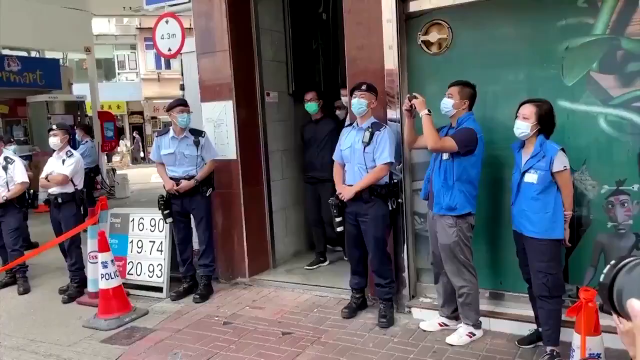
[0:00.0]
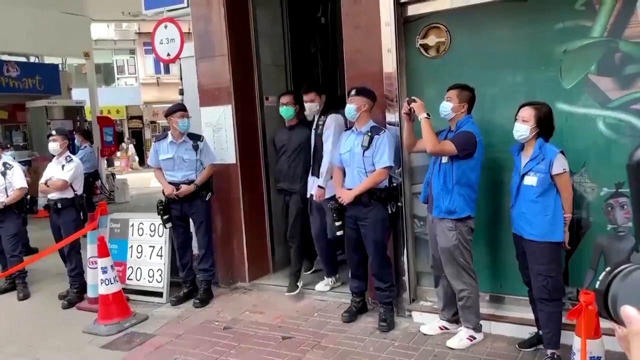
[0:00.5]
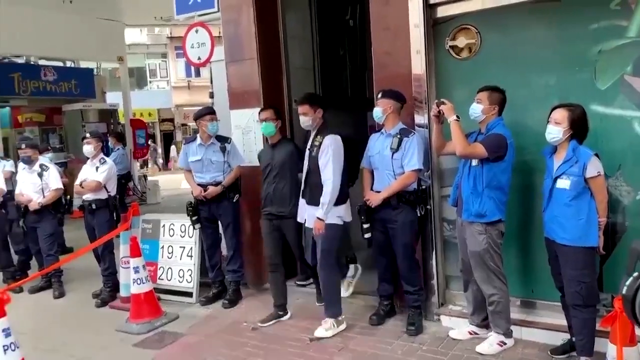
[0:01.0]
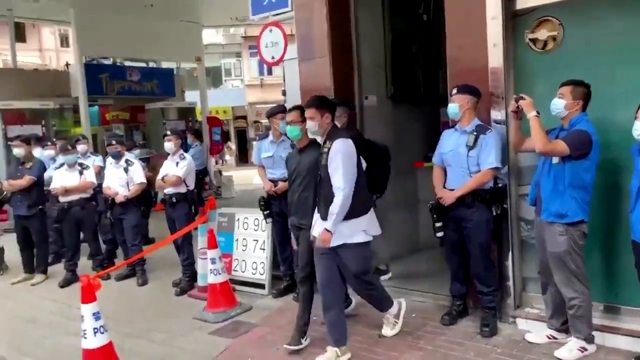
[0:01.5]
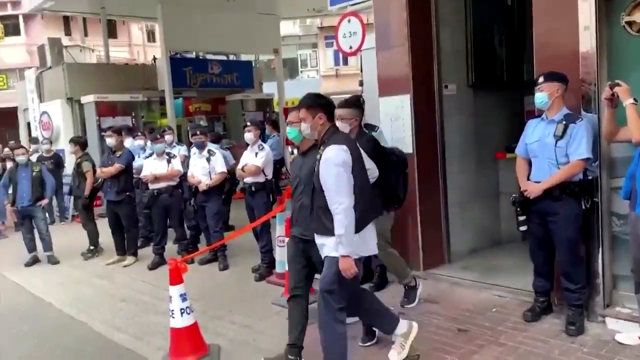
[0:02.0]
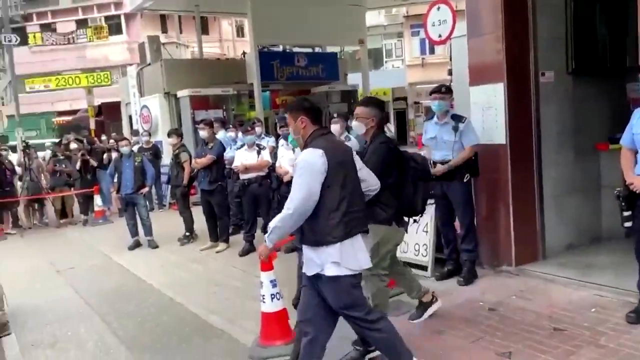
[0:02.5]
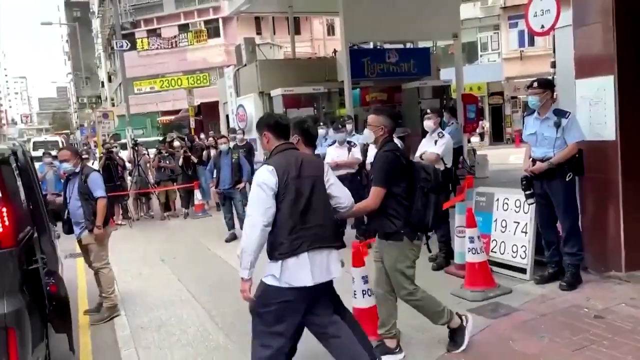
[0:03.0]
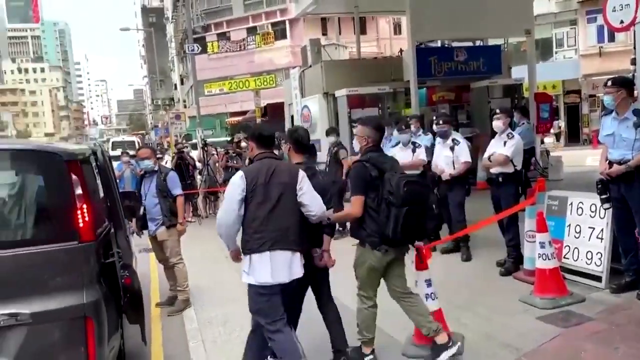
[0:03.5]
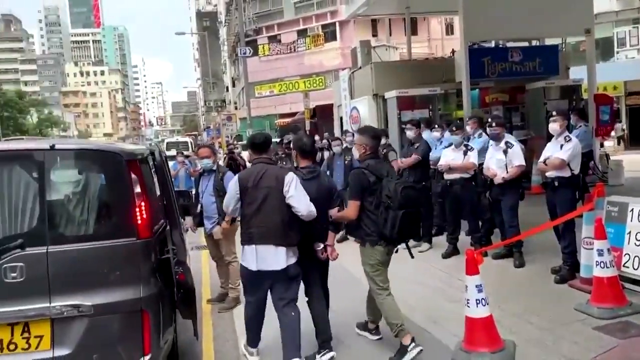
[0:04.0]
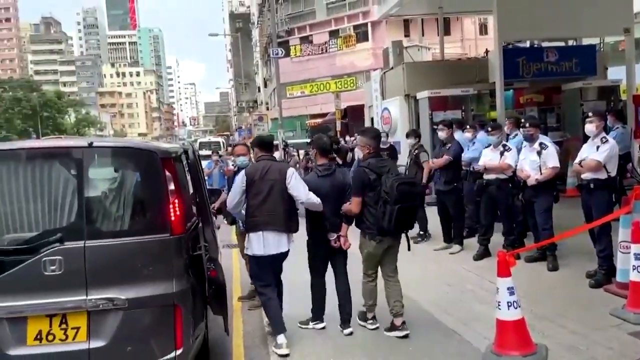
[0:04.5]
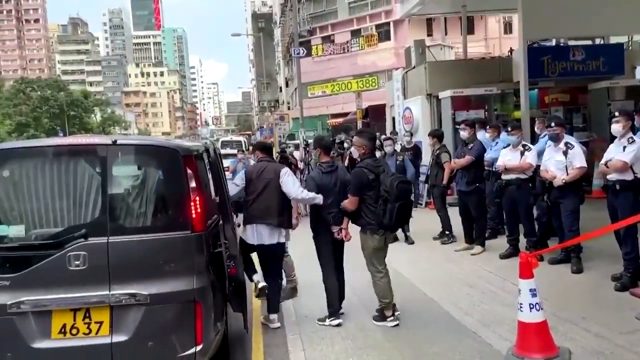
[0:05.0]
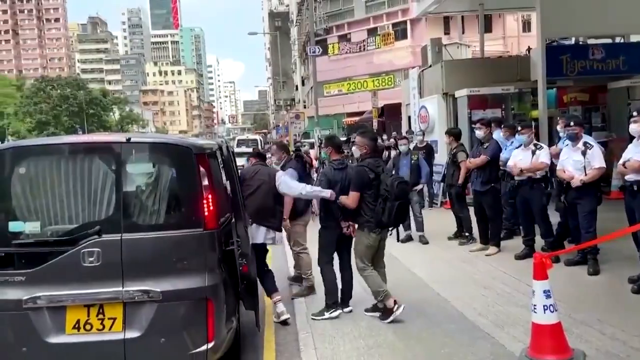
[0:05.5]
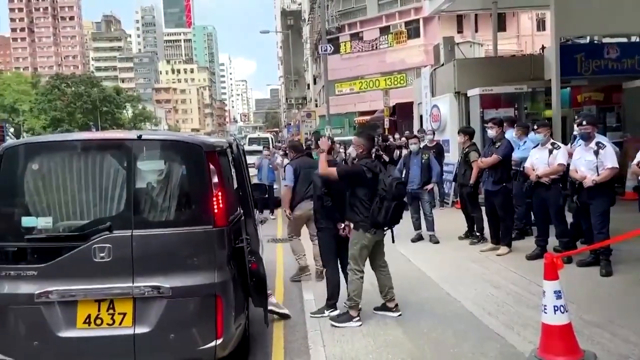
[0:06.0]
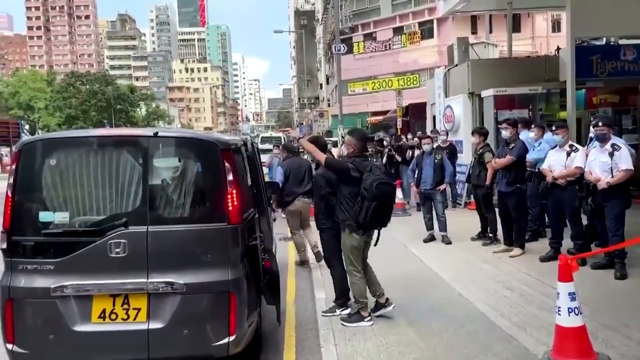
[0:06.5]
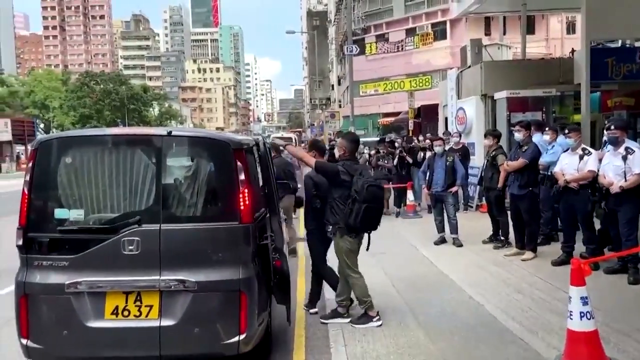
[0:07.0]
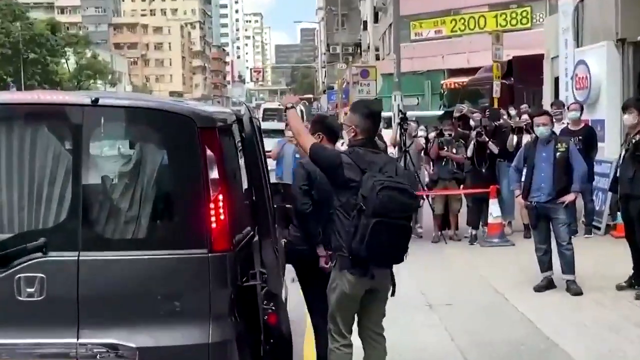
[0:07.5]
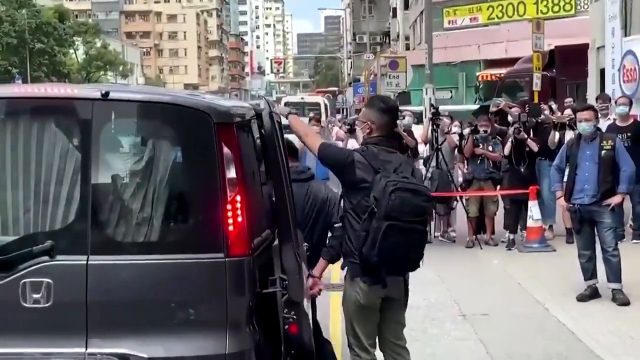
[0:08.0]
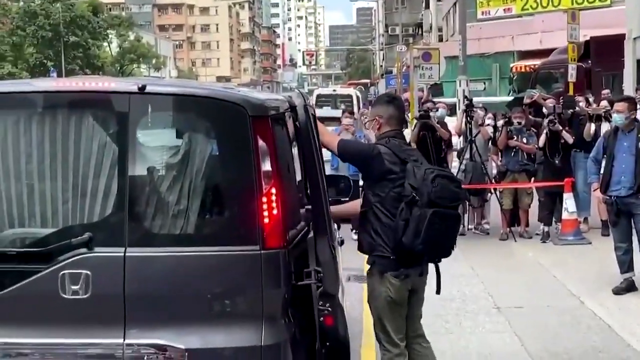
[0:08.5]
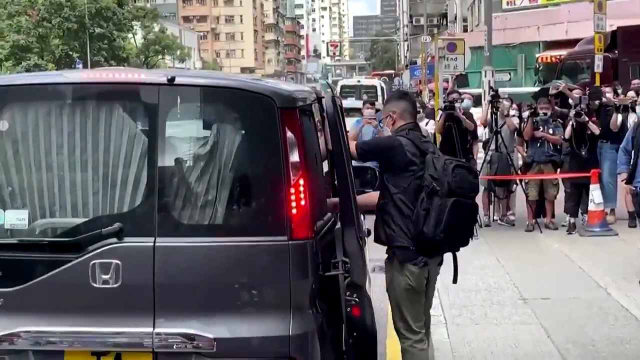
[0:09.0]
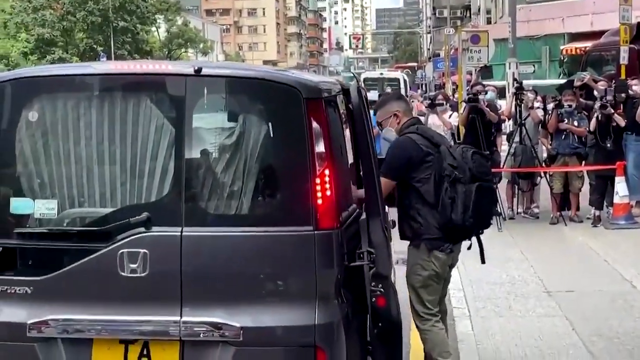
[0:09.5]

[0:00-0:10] The scene is in Asia and opens with many Asian people, perhaps Chinese, wearing masks. Thirteen people stand stationary in a line, while two people walk through a door from the right of the screen towards the left. In the background is a shop called Tiger Mart. Red and white traffic cones on the floor say "police", and a circular sign above reads "4.3 metres". The two people walk out of the building on the right, head towards a car with the number plate TA4537 and get inside, surrounded by many photographers and onlookers. Further in the background, a yellow sign shows the numbers "23001388".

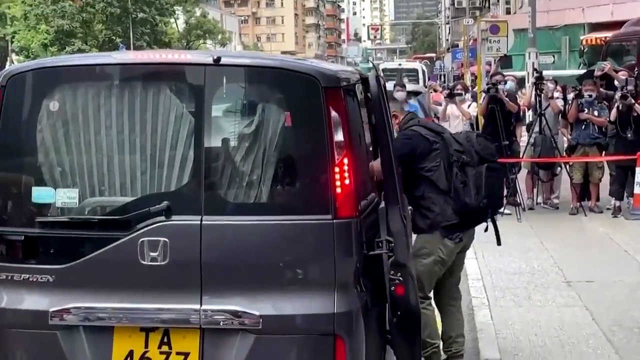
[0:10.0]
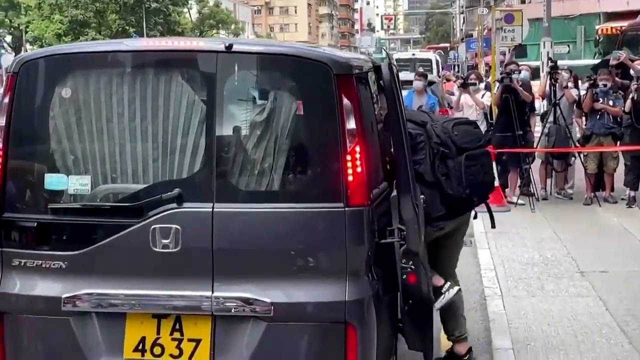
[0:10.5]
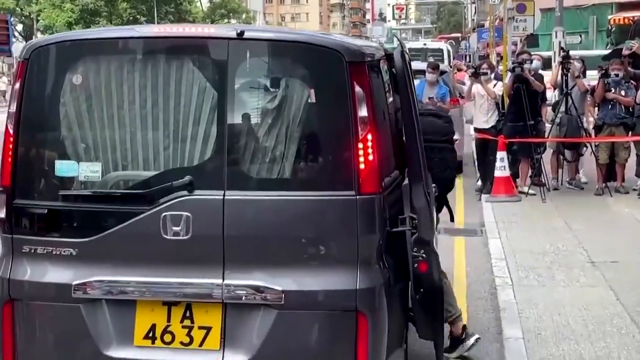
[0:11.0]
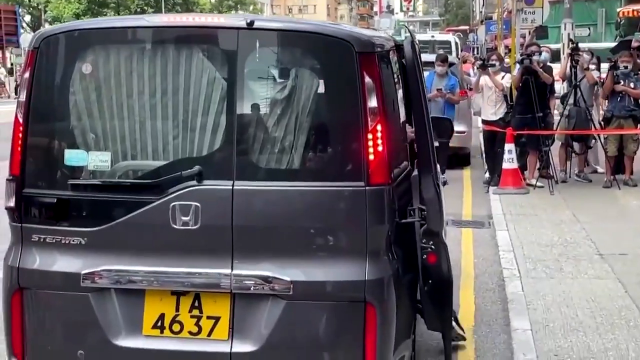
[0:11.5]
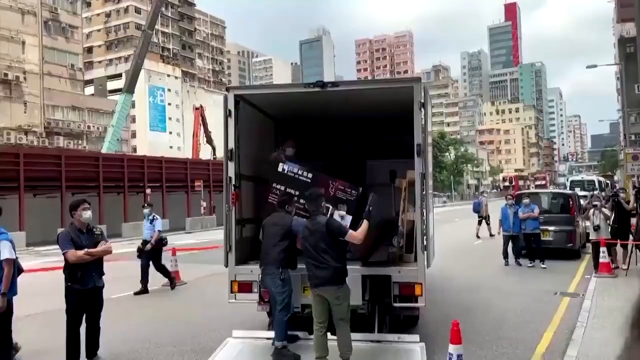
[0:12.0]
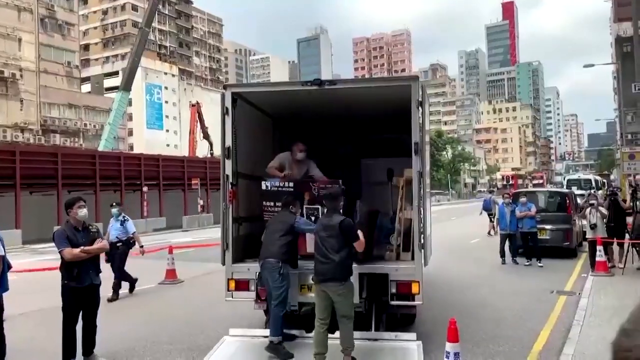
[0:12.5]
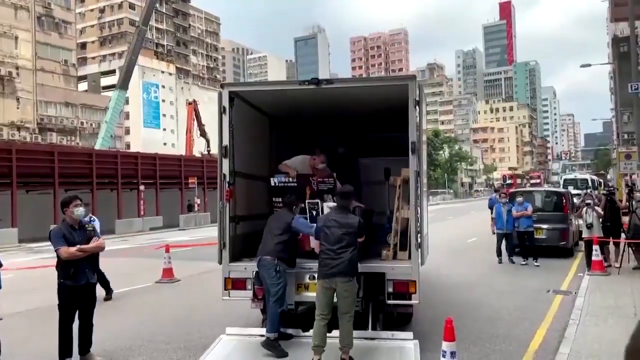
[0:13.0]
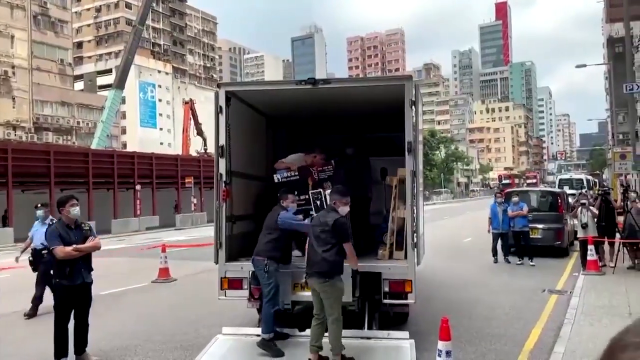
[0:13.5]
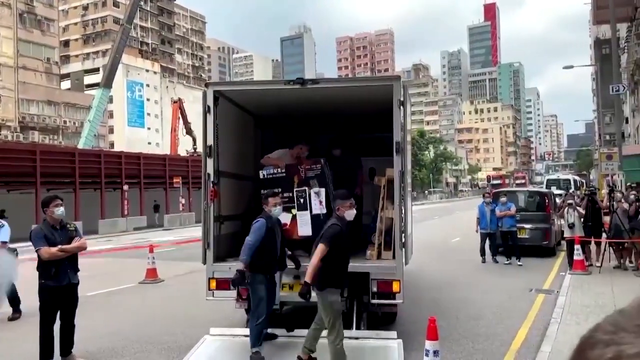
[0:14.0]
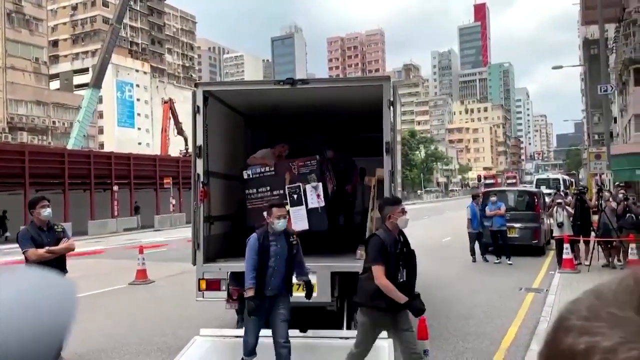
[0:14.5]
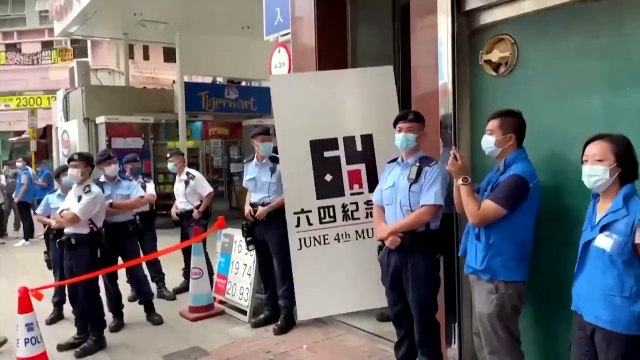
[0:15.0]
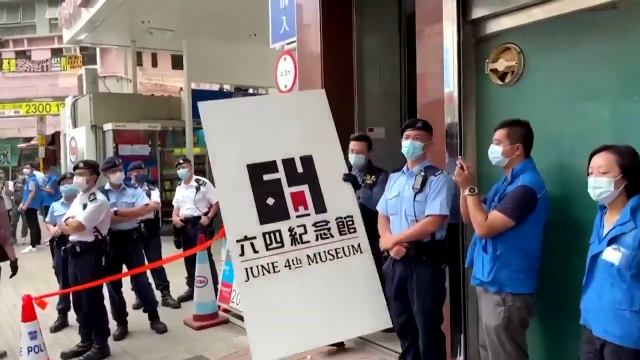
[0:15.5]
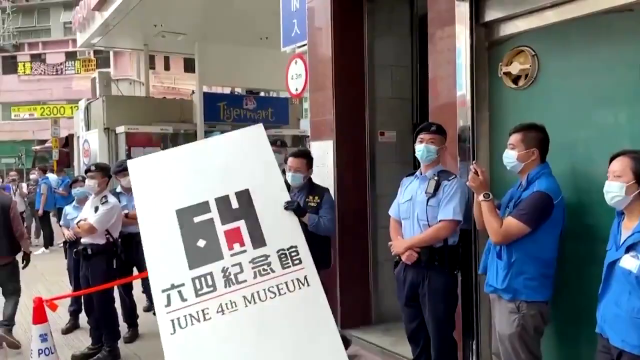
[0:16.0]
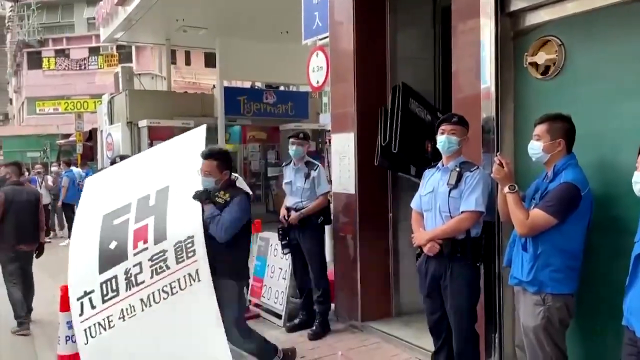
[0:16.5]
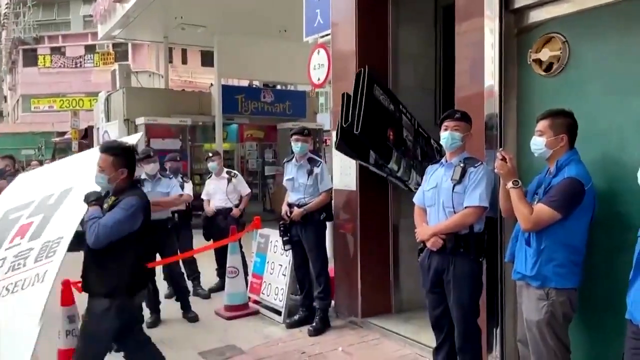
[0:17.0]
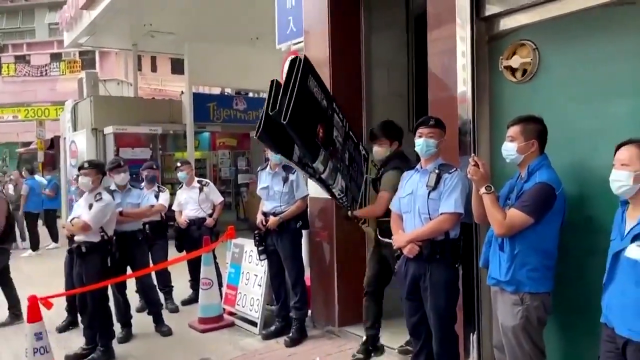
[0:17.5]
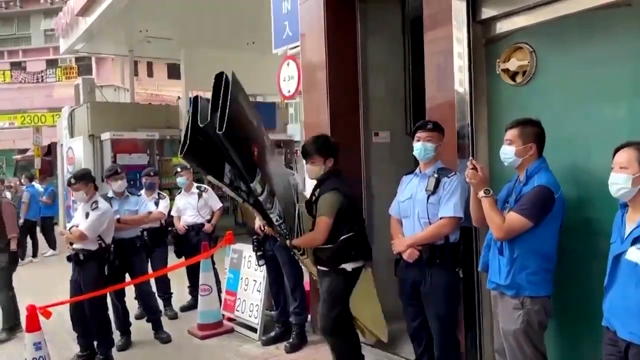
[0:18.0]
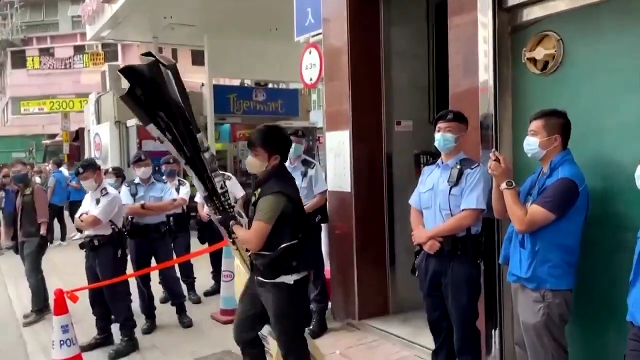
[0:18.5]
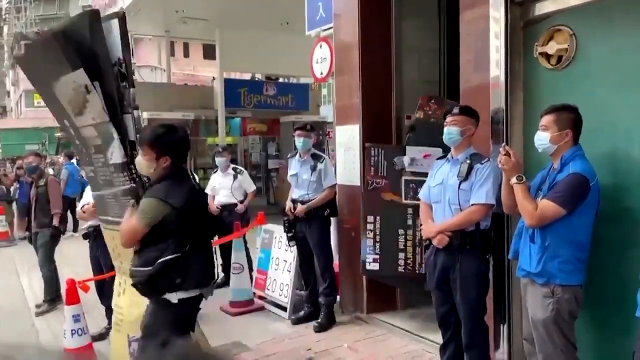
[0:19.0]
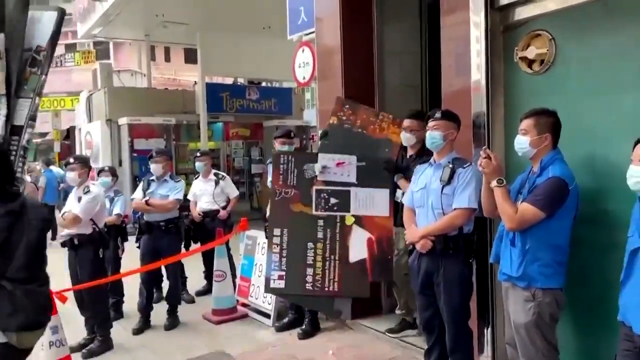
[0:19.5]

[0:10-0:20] The people have got into the car, and the video cuts to a shot from further back showing two people at the back of a lorry putting a box into it; the box's contents are not clear. Another man comes out of the building holding a large poster that reads "June the 4th Museum number 64", with some Chinese-like writing in the middle. More items come out of the building as people bring out more posters and cards with different things on them. The background shows a fairly built-up city with many concrete buildings that look to be in quite bad condition; the area does not look very modern and seems quite old, perhaps built in the early 20th century.